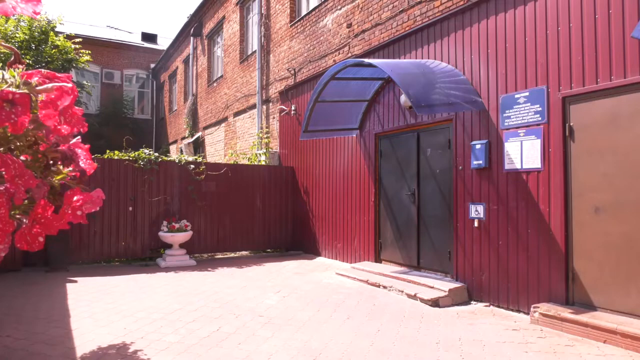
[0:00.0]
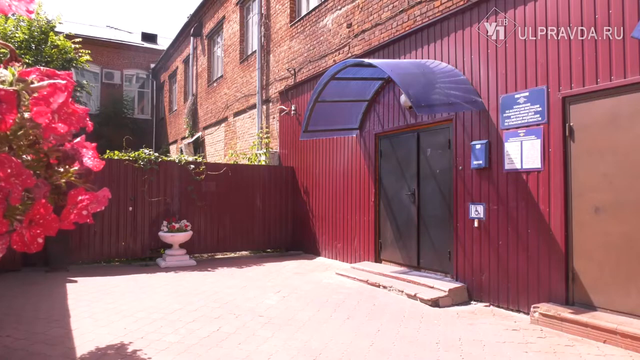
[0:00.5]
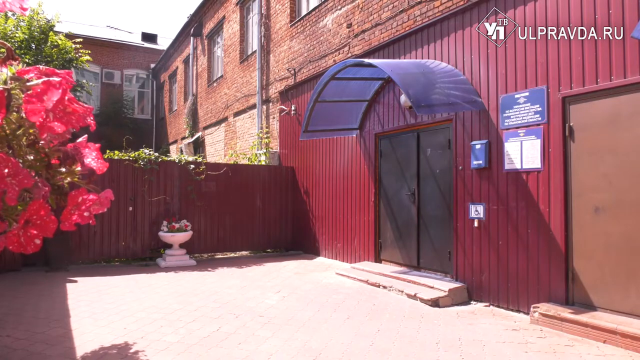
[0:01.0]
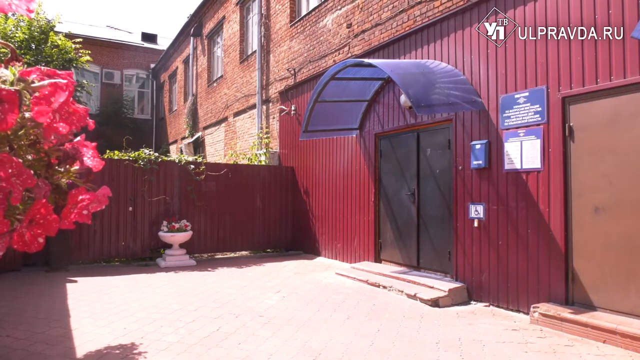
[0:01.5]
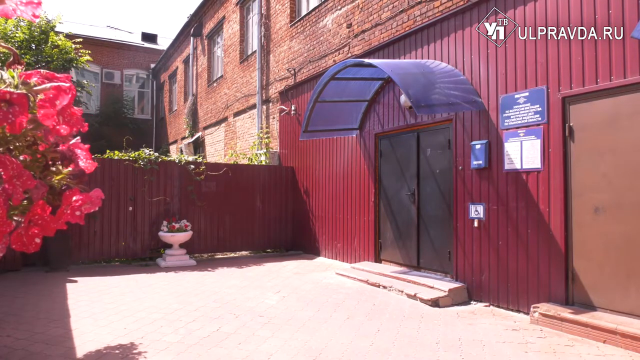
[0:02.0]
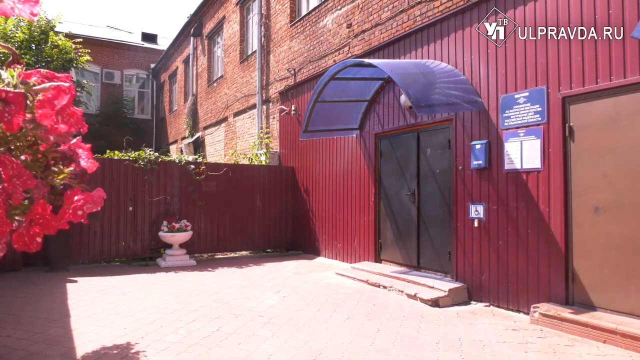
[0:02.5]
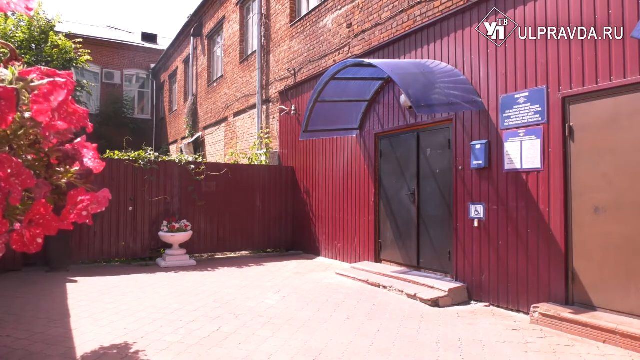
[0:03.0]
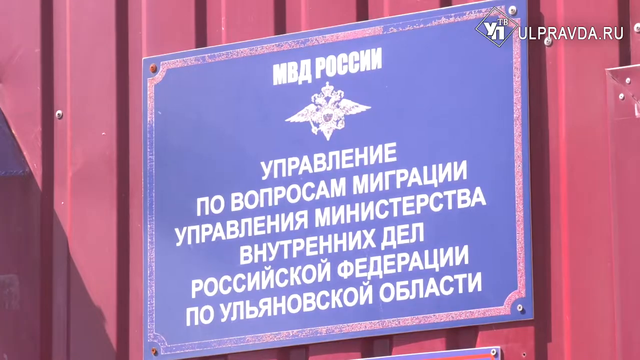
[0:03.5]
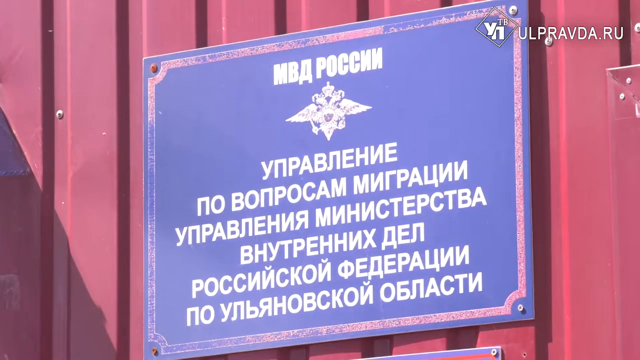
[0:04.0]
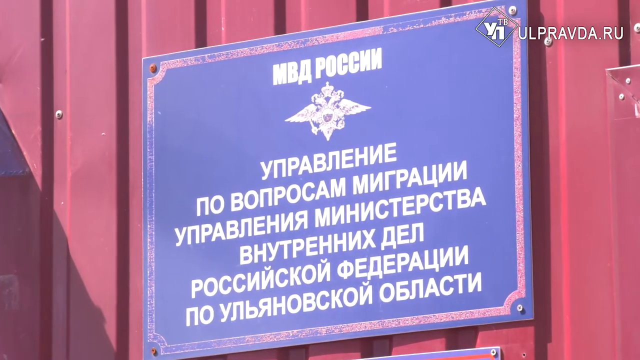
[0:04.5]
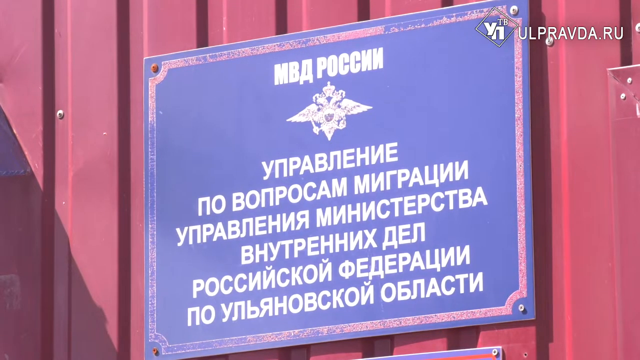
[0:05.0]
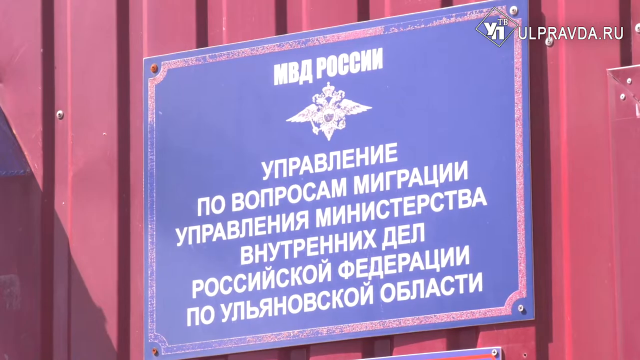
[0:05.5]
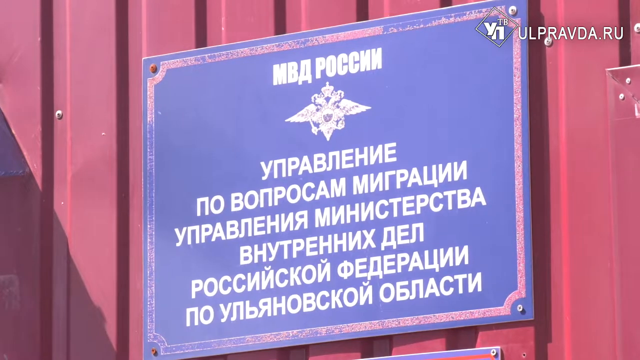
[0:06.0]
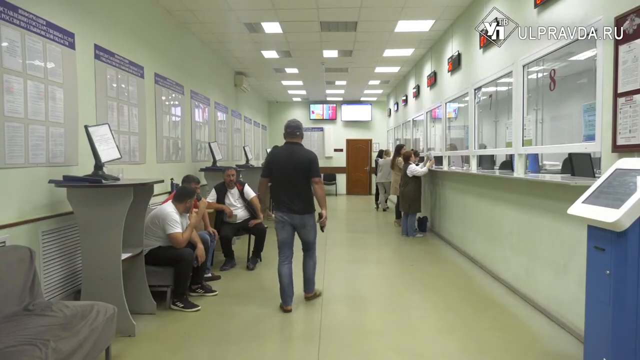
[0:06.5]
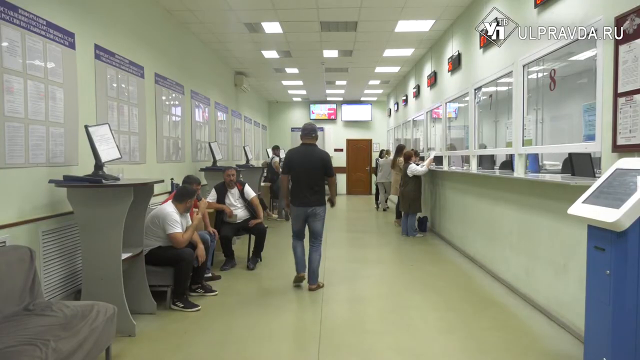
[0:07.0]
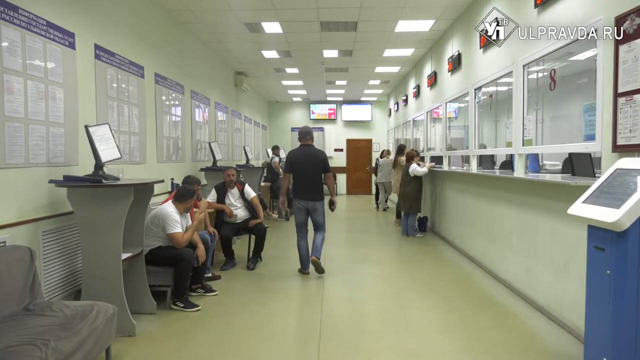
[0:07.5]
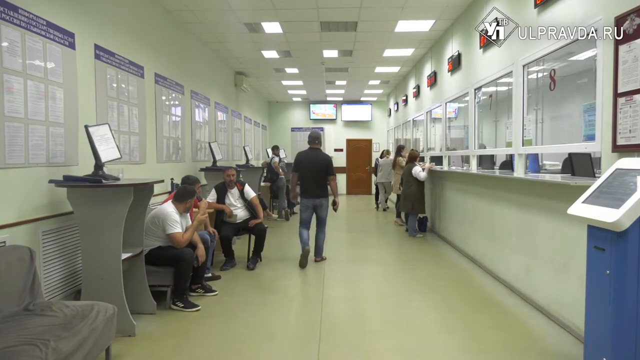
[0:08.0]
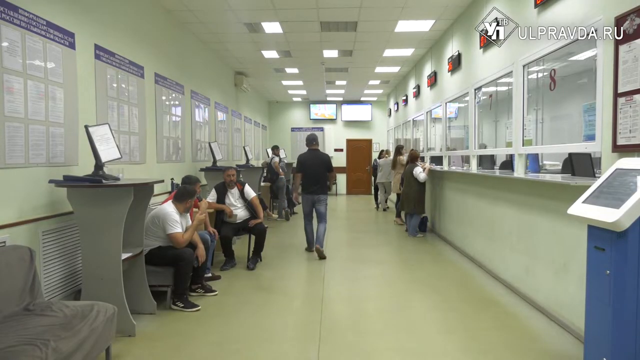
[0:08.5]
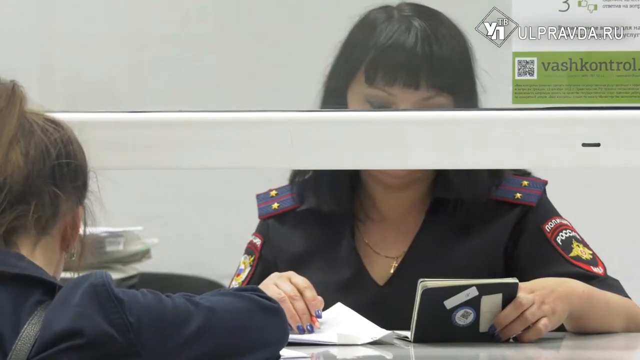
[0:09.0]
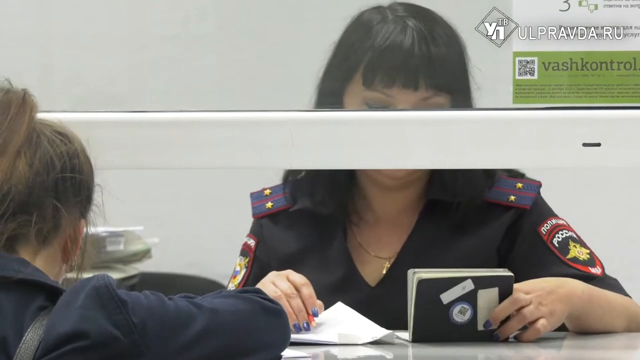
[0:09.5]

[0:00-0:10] A blue sign with white text appears. The scene then changes to a group of people waiting in an area where workers on the other side of a screen look at their paperwork, apparently to help them with some process. The building seen at the very beginning is red and has a door with many windows in it; it is likely the building these people walk into to wait, probably to get their passports authorized.